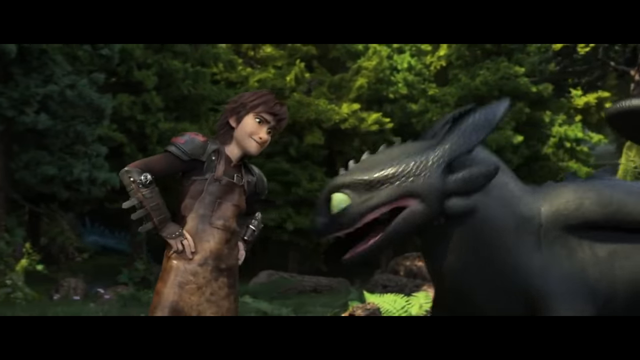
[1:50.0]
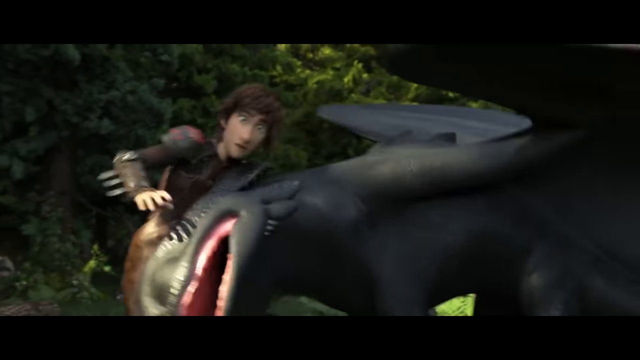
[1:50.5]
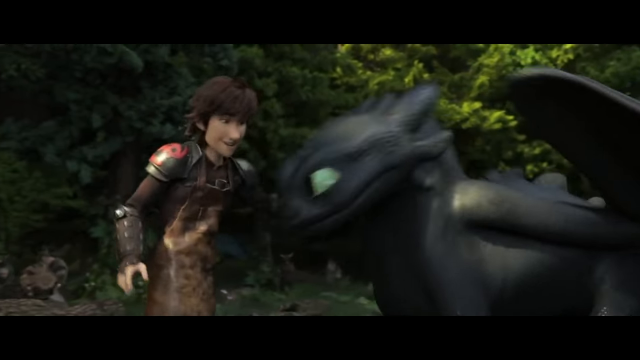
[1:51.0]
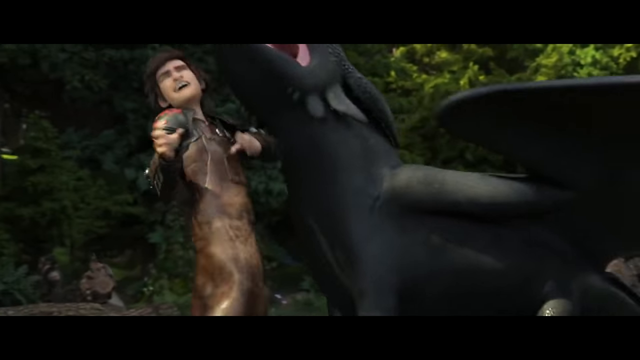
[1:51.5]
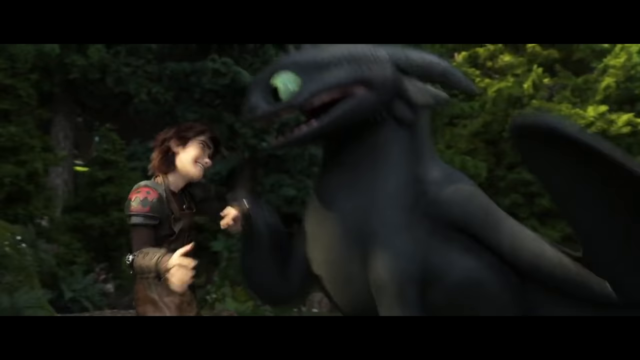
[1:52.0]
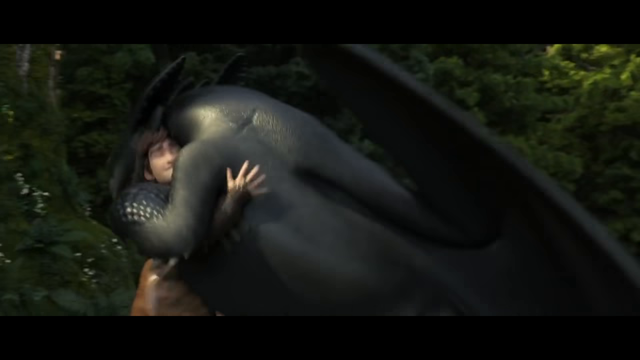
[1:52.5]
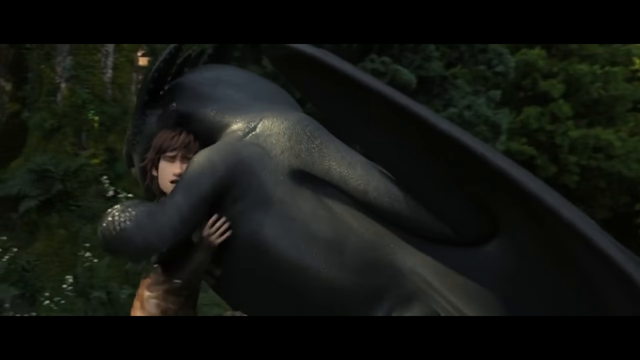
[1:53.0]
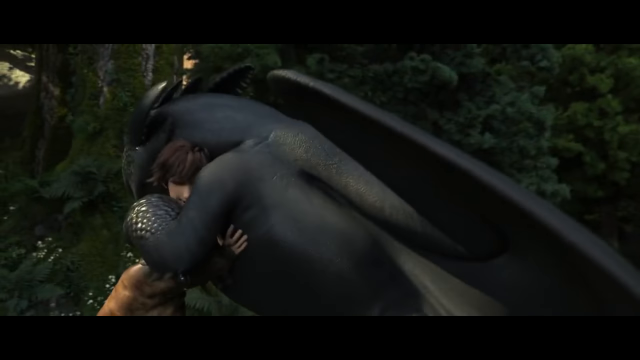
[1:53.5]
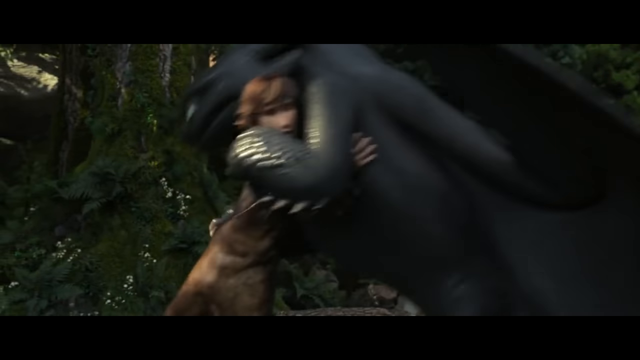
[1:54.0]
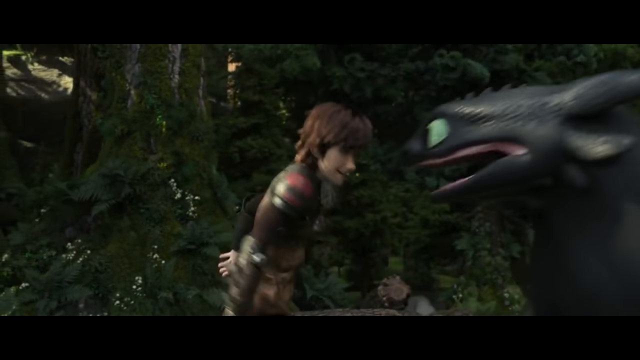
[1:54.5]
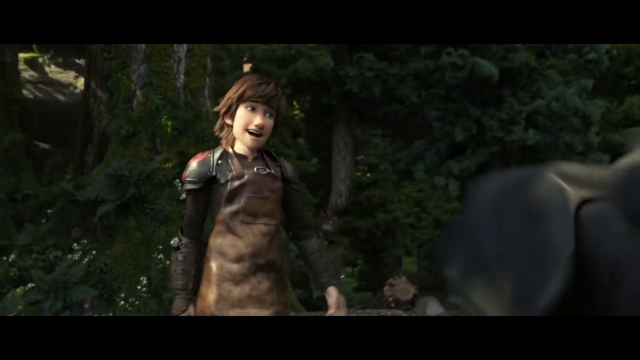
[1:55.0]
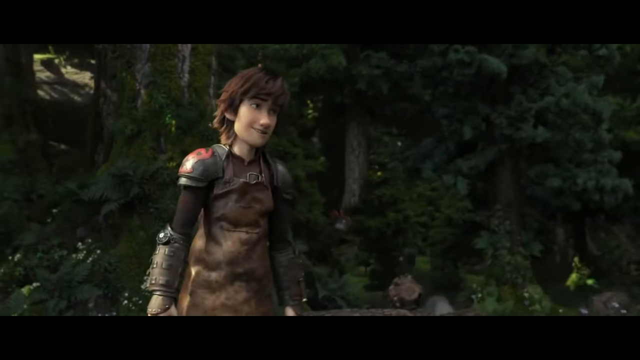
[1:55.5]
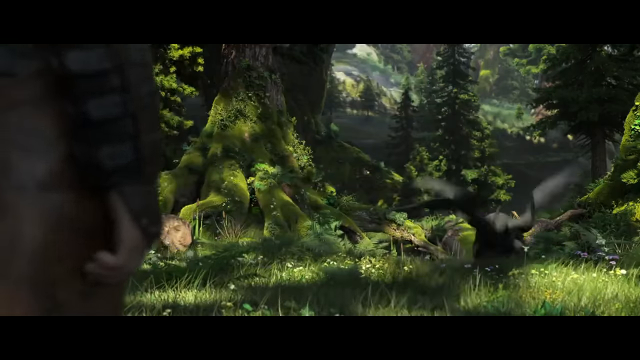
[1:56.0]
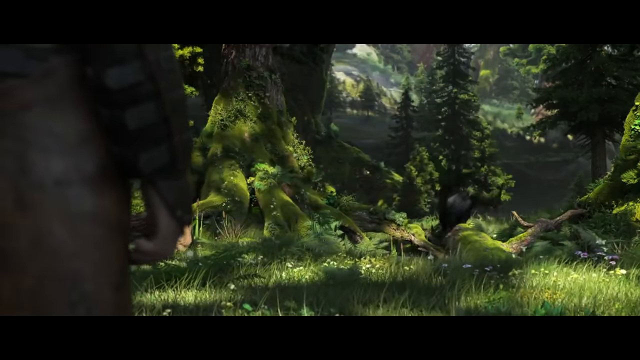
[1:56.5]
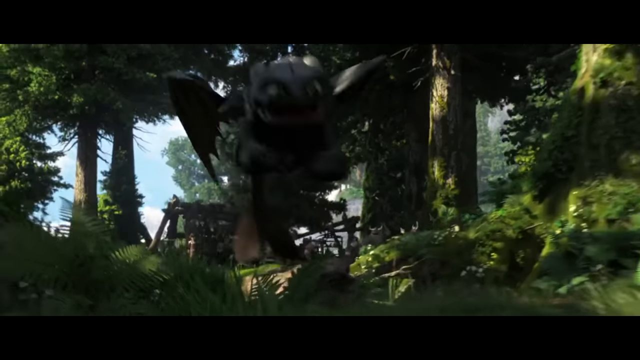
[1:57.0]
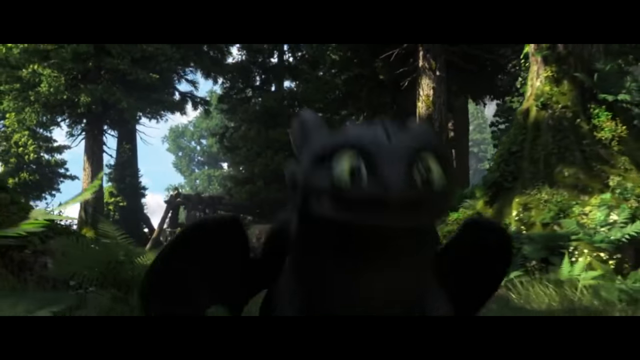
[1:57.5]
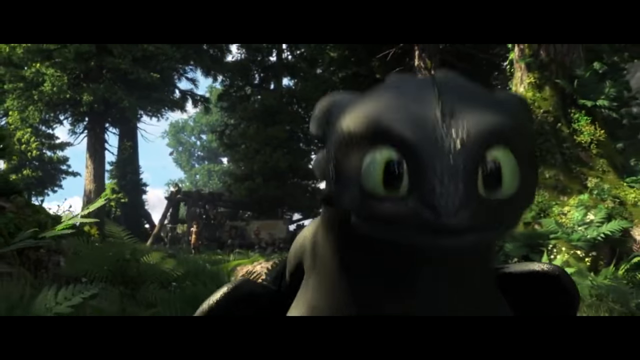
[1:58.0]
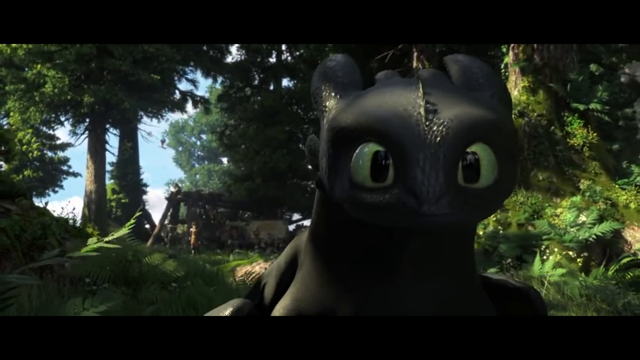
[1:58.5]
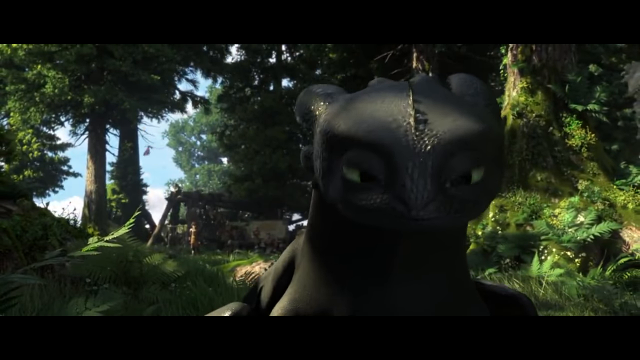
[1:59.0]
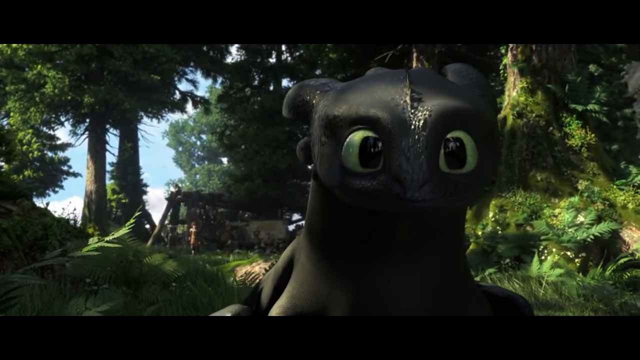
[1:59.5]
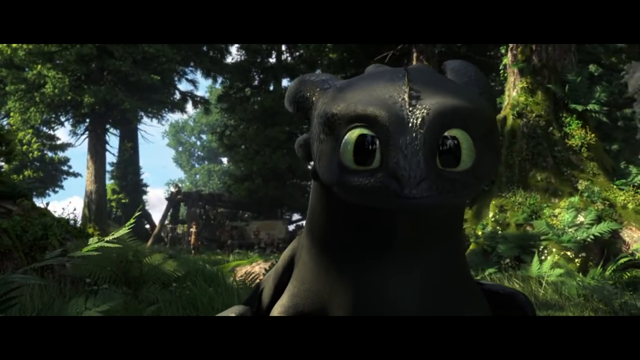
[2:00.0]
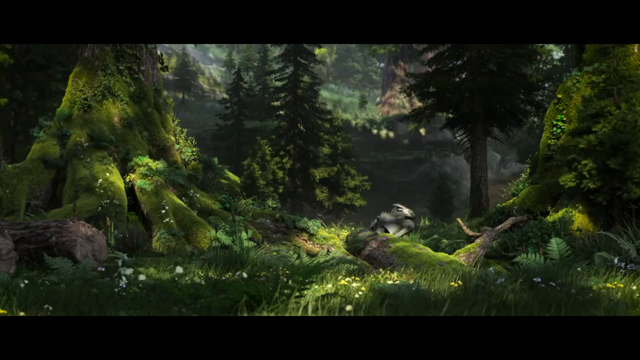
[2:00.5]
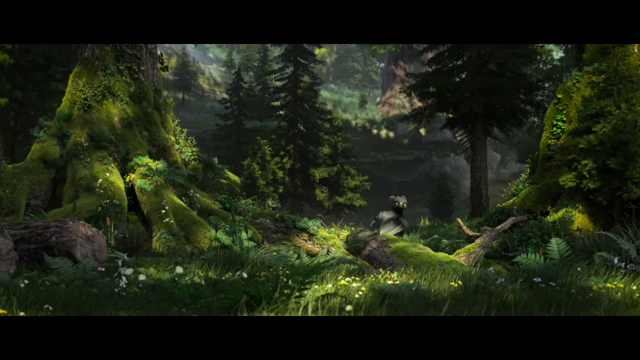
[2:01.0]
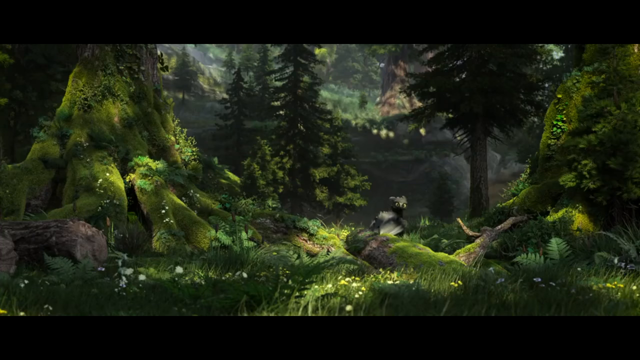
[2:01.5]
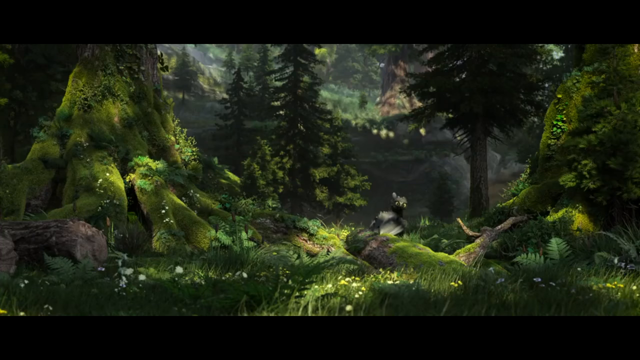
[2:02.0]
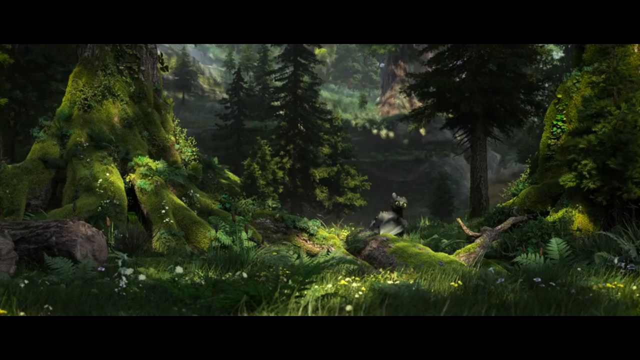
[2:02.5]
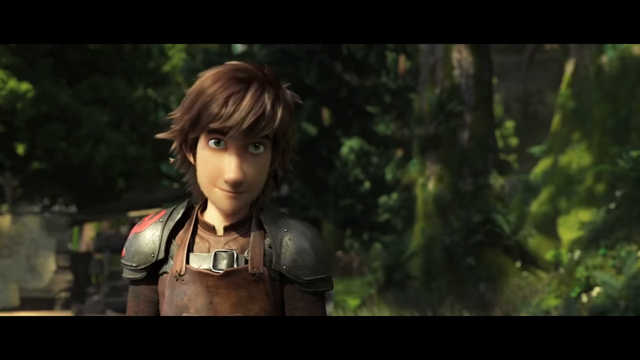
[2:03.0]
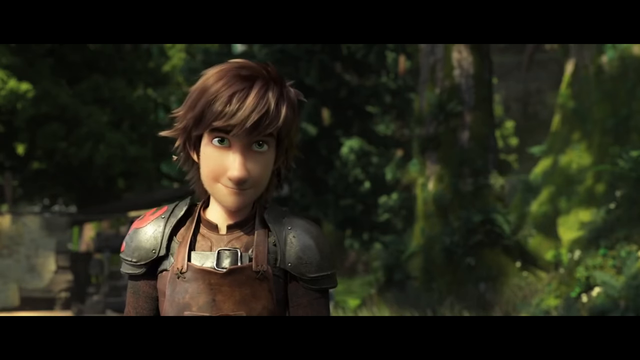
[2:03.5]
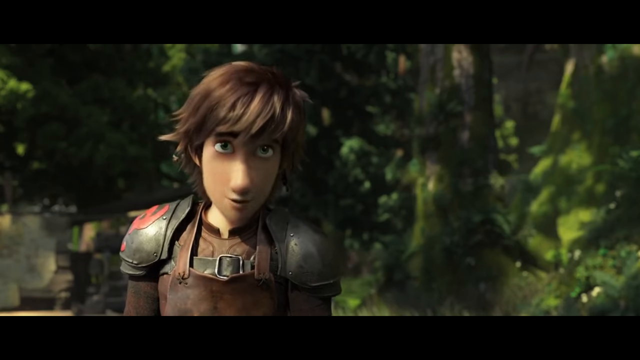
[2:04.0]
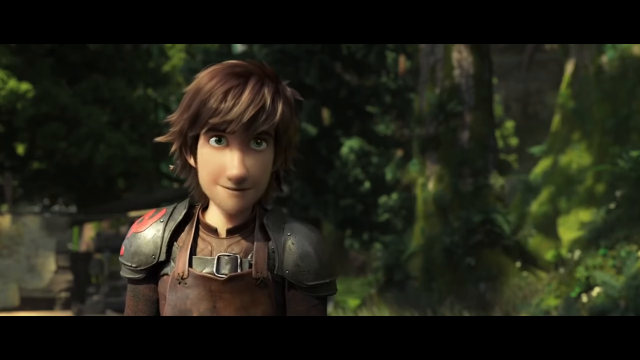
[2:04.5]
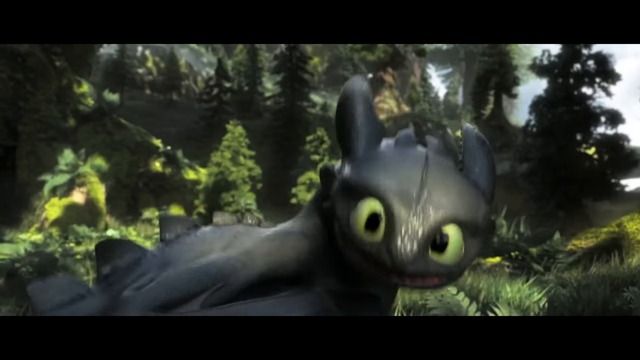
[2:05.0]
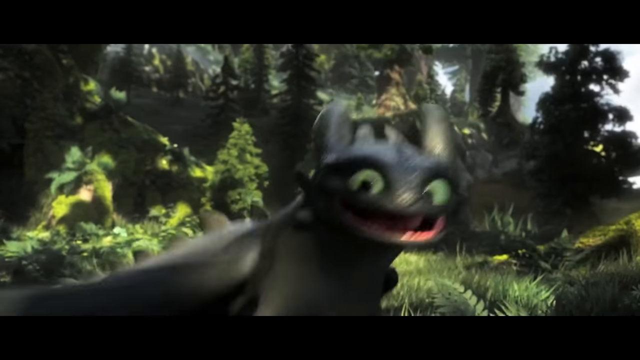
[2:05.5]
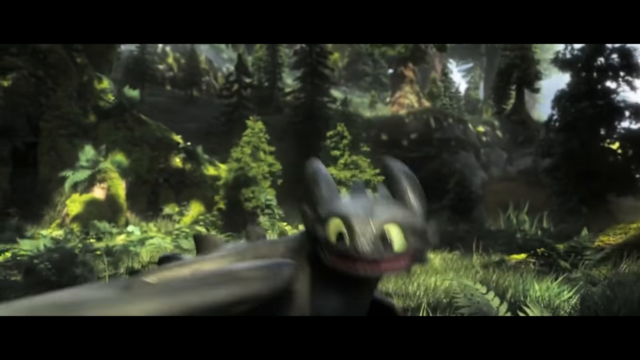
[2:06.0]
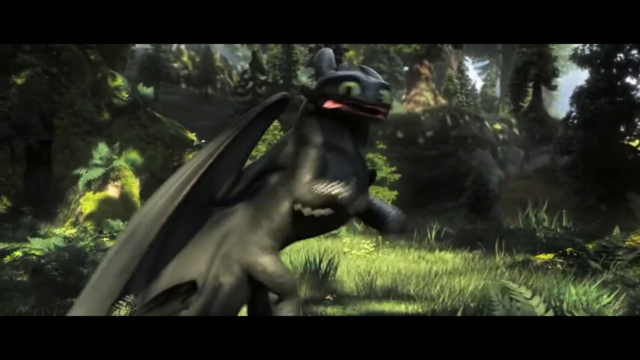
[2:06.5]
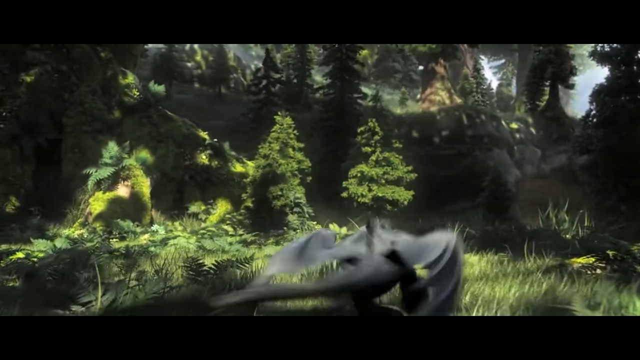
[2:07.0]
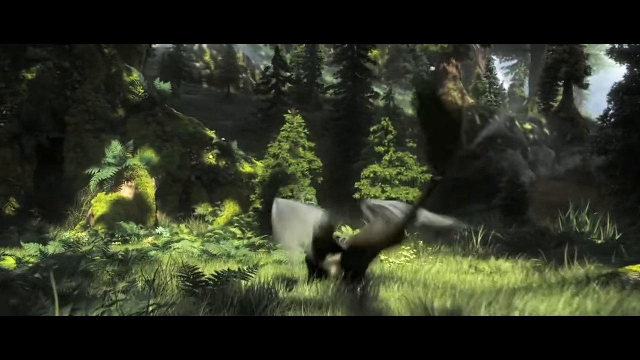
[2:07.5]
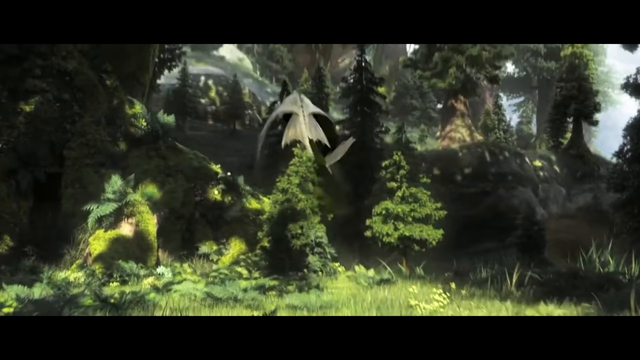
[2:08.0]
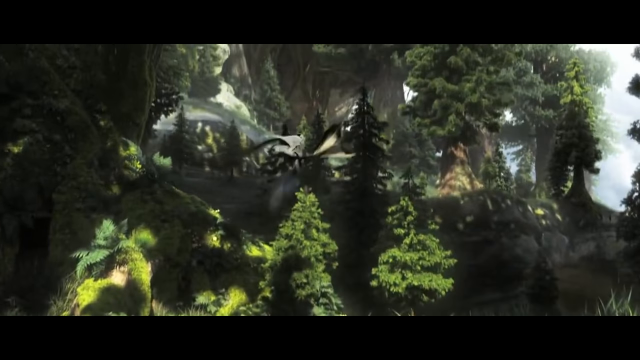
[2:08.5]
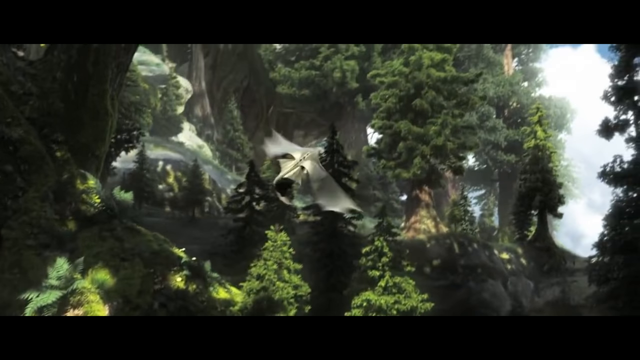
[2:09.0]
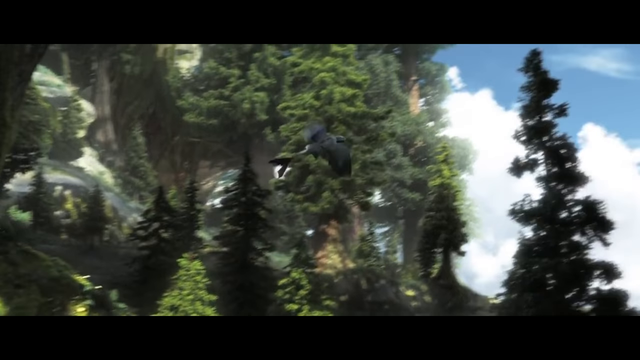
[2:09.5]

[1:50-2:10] A man who is possibly the dragon's owner, and who has a close relationship with it, is on the left side of the screen looking toward the right. He has both hands on his hips, wears a distressed brown apron, and has his body tipped over toward his right side. The dragon comes, looks up, and hugs him now that it has a double tail. The dragon is about to take off but stops with its eyes turned around; the person says something to it, and the dragon keeps going. It takes off flying, flies straight, and then goes up toward the right, apparently to avoid the trees.